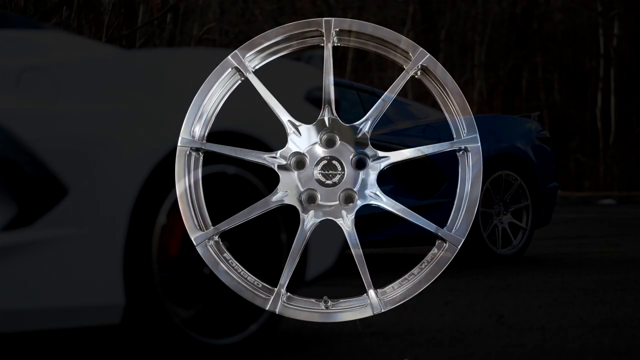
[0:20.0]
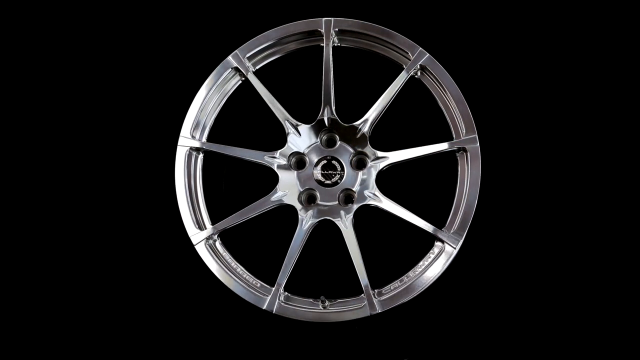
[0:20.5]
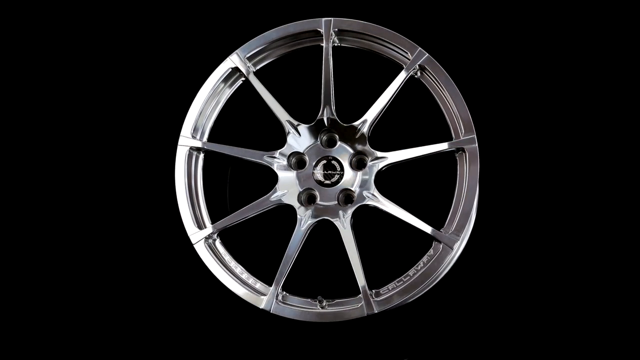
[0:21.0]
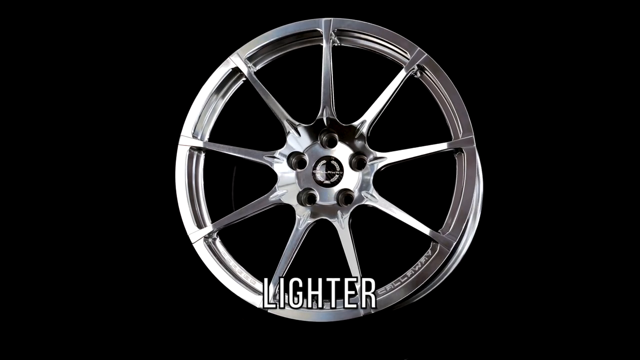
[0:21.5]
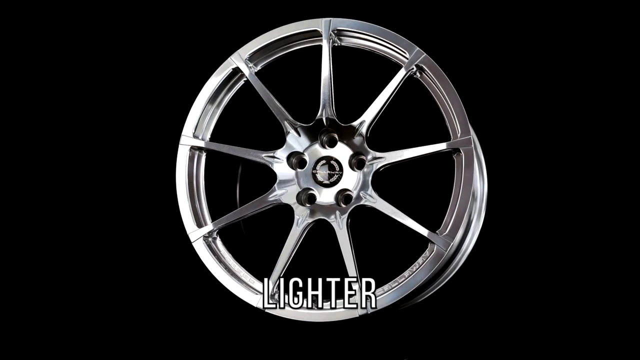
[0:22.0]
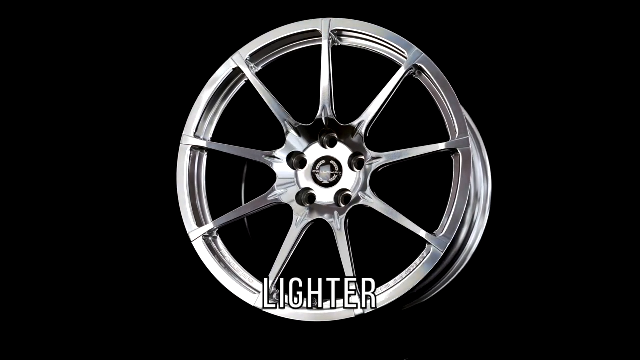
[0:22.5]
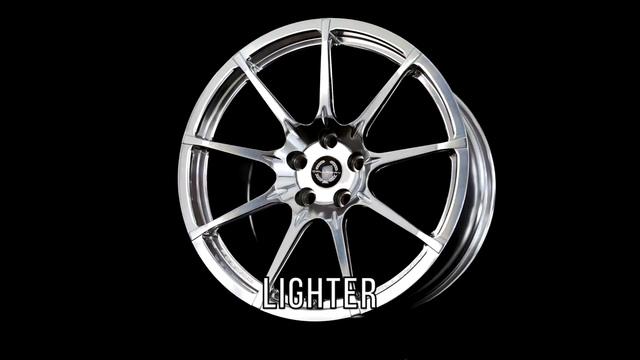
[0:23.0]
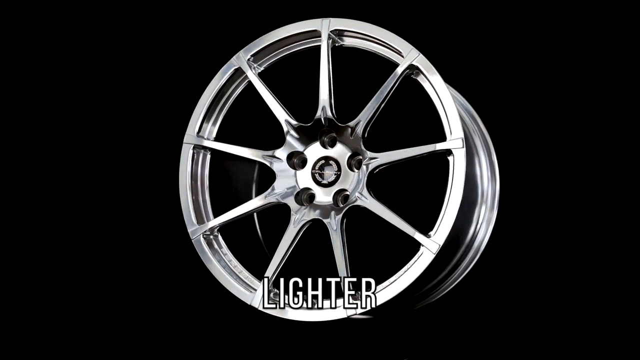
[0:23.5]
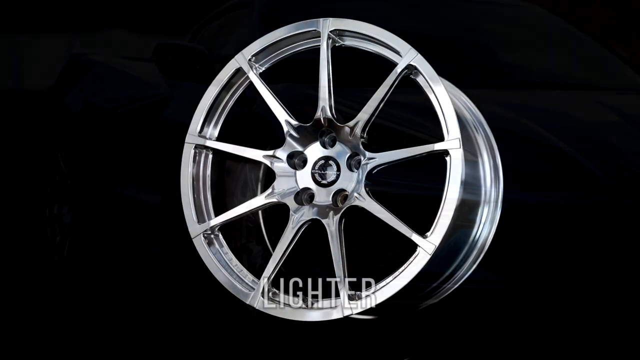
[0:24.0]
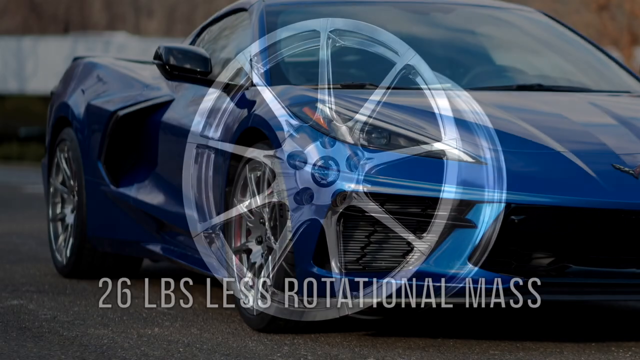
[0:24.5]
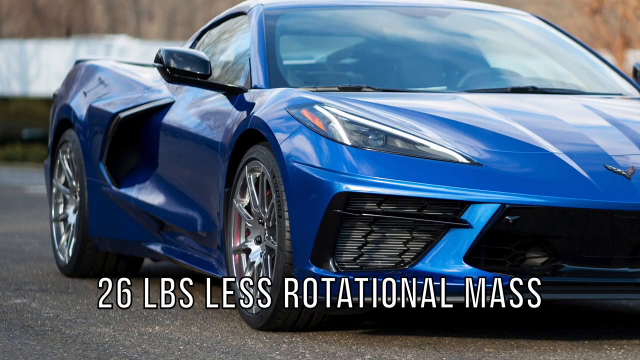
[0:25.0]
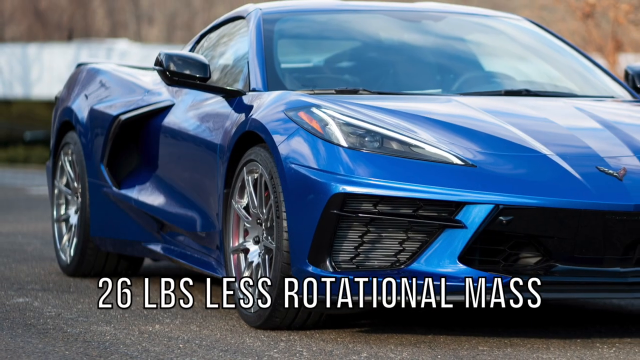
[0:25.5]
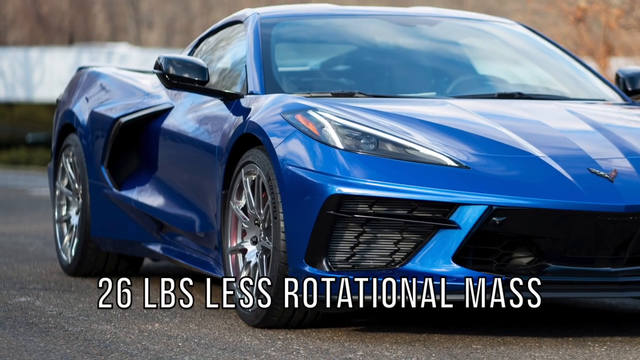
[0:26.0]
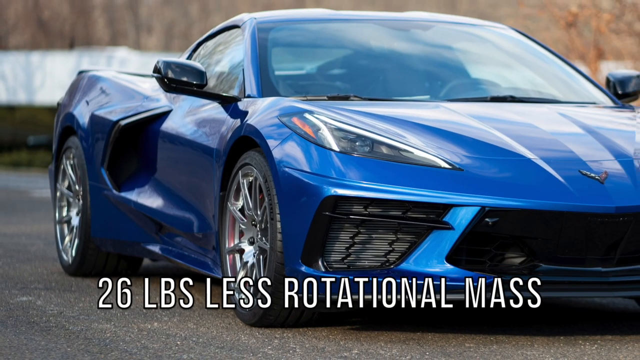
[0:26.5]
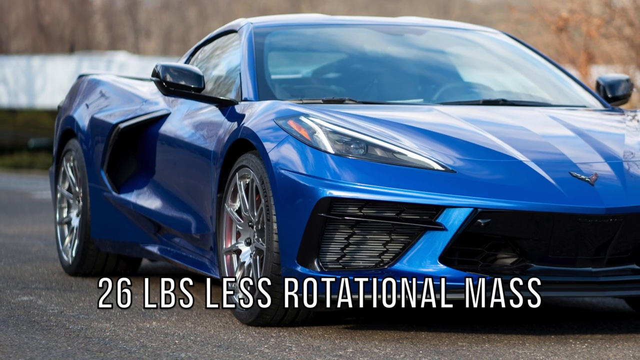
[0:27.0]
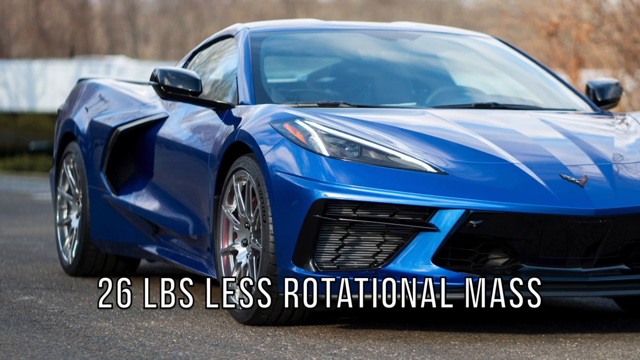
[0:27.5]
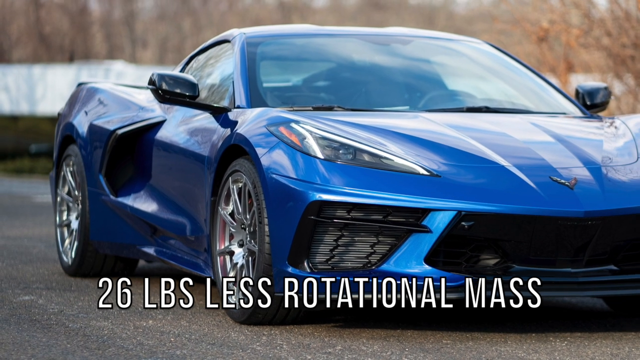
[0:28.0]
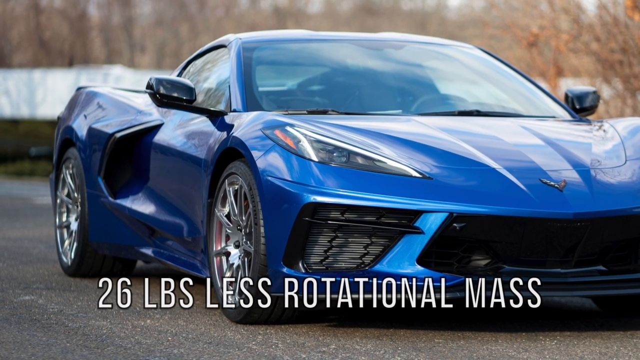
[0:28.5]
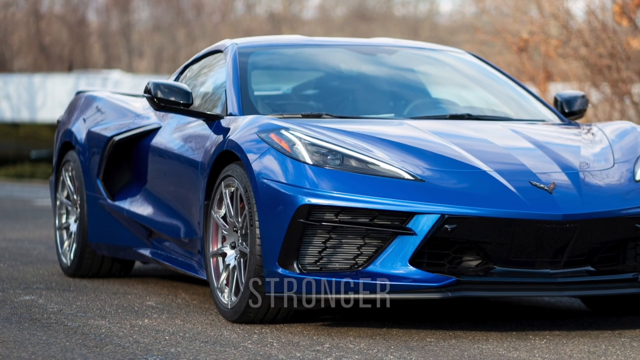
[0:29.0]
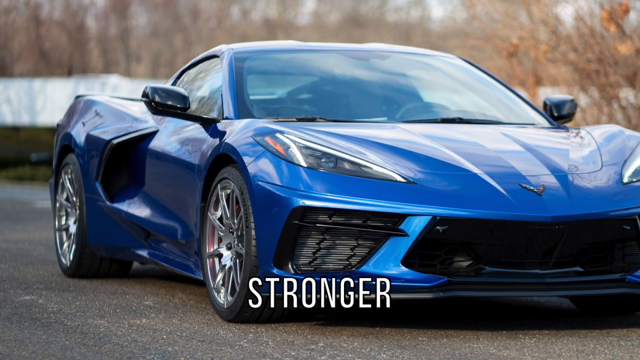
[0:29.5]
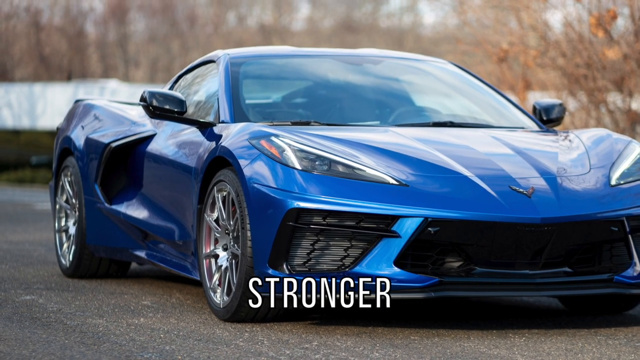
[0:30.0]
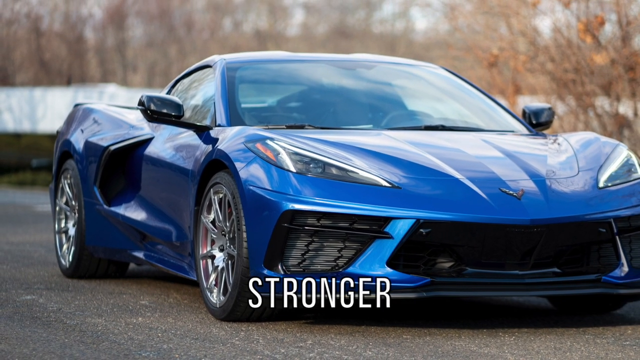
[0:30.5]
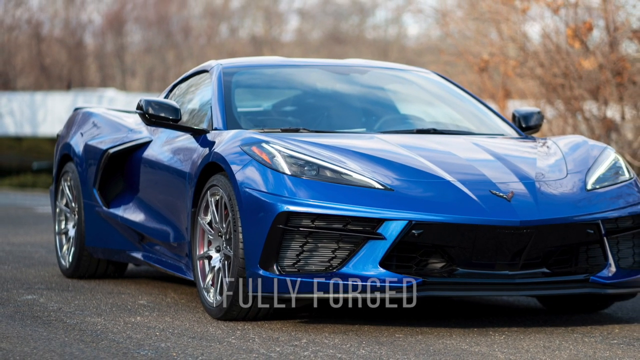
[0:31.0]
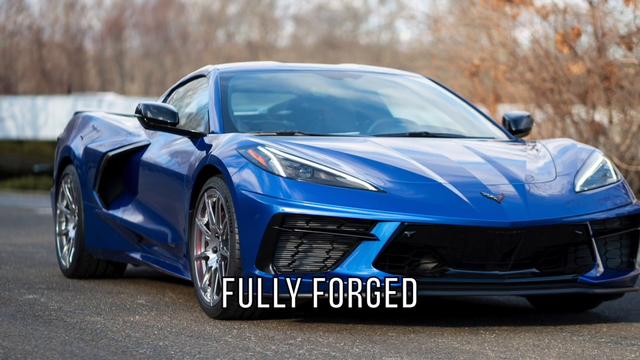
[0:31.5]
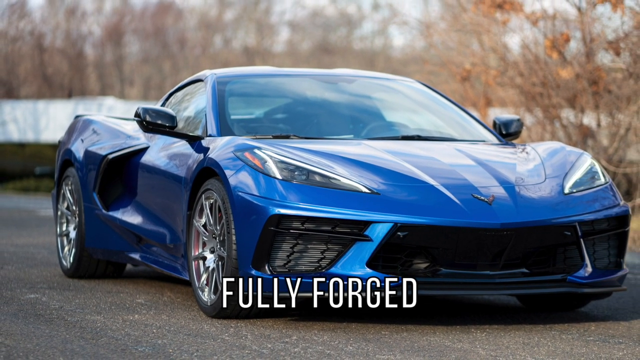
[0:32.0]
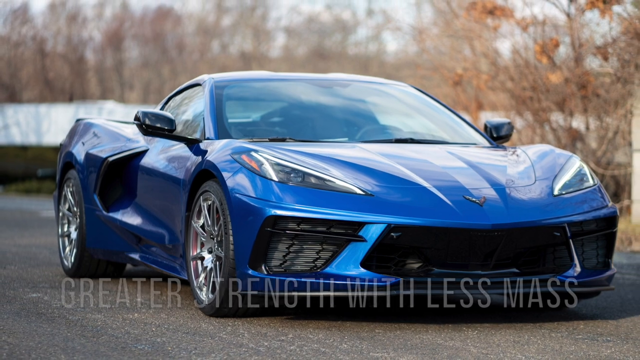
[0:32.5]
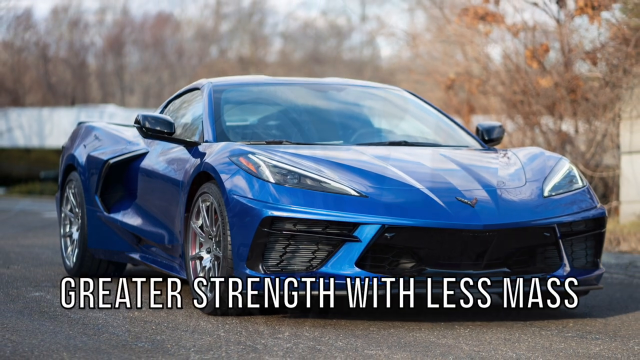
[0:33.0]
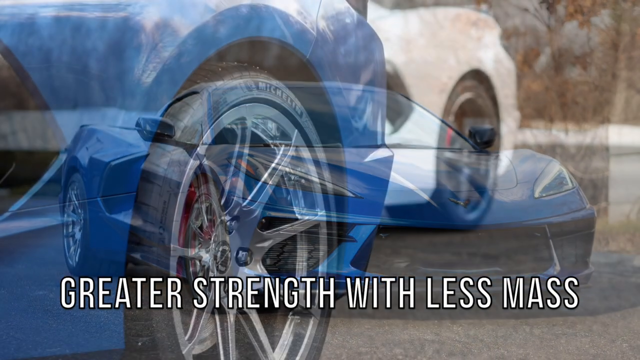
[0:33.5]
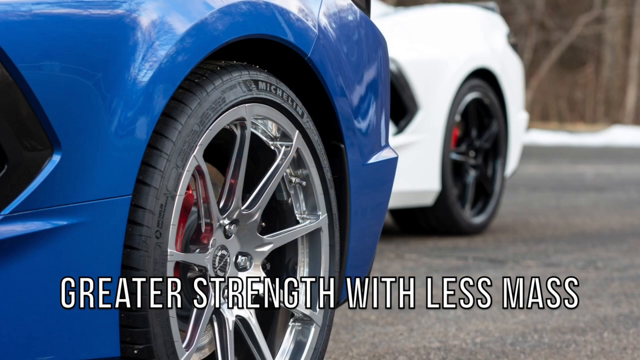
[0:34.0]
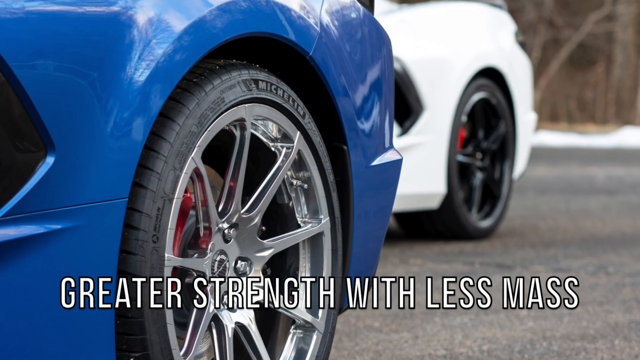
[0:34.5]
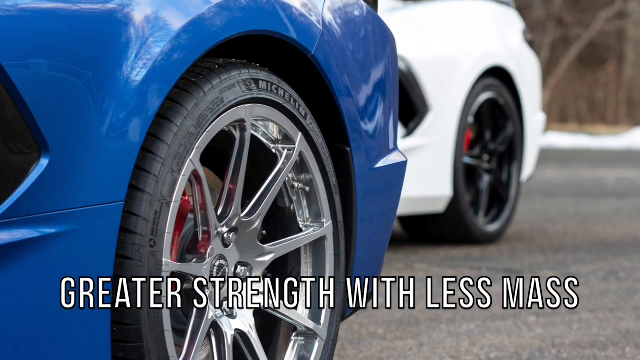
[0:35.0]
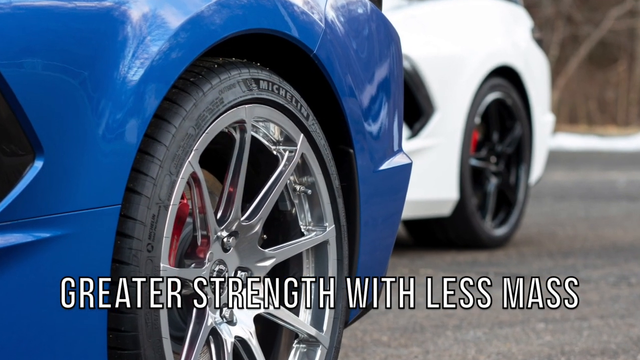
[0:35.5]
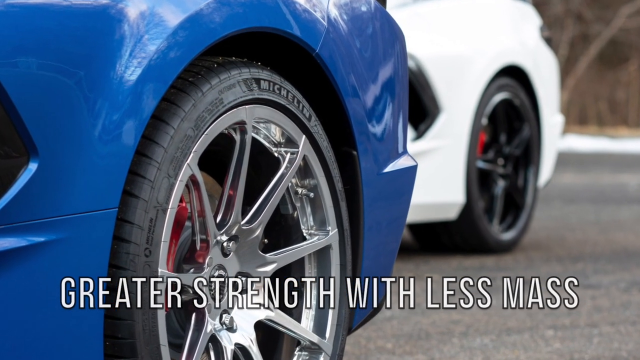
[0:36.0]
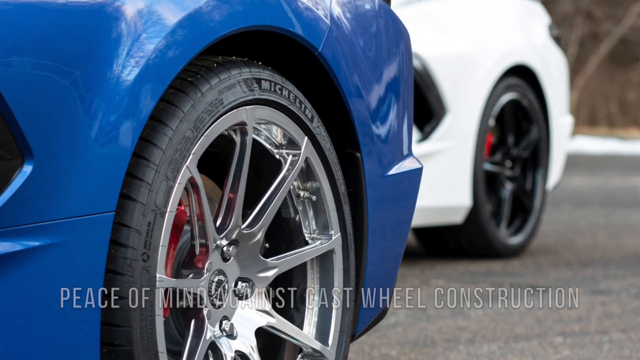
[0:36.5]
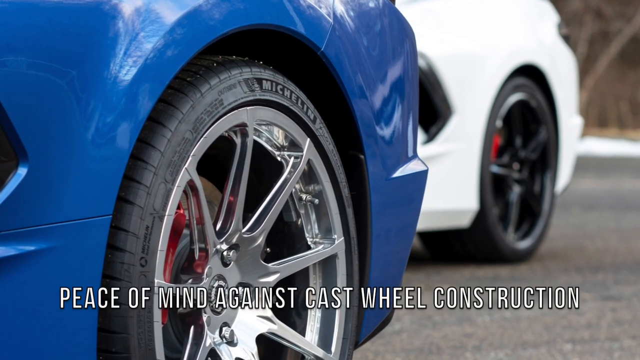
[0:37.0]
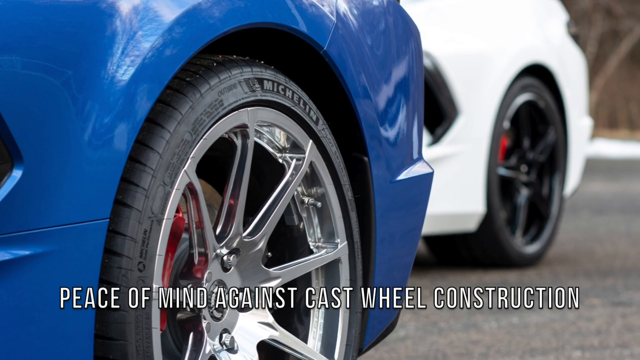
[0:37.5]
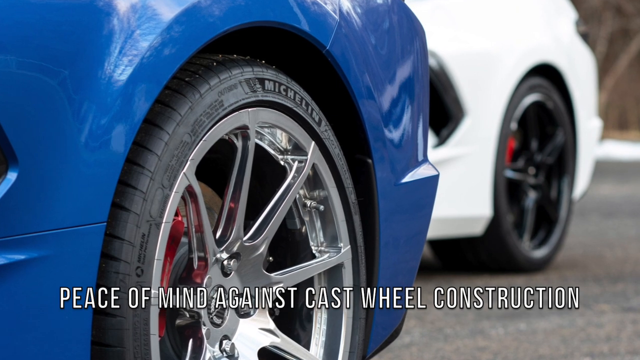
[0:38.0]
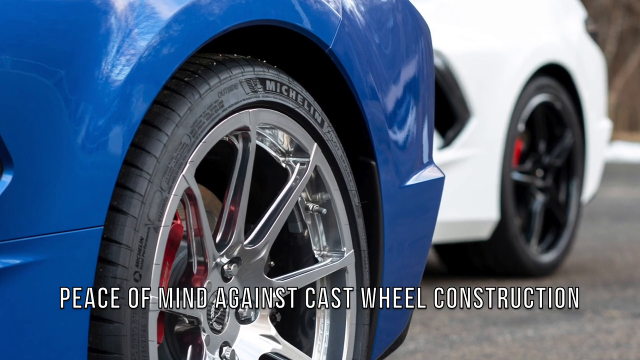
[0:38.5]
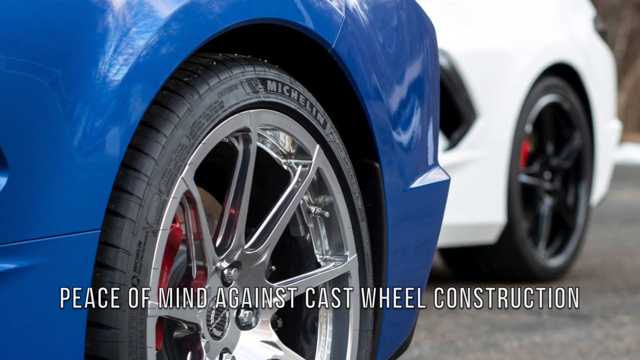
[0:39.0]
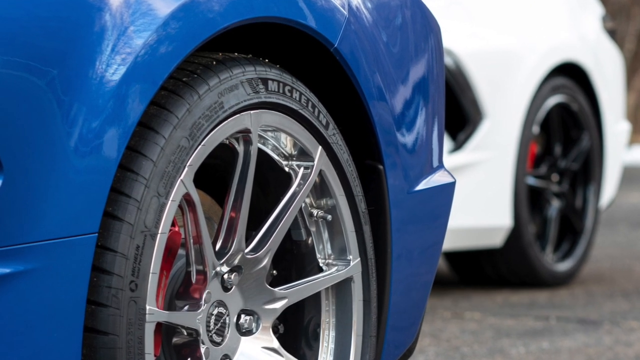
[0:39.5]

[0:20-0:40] A rim for a car is shown, with text at the bottom of the screen stating that the rims are lighter, "26 pounds less rotational mass," and stronger, "fully forged, greater strength with less mass." Text also mentions "peace of mind against cast wheel construction." The wheels are then shown mounted on a pair of Corvette sports cars: a blue Corvette in the rear with silver polished rims and a white Corvette in the front with black polished rims.